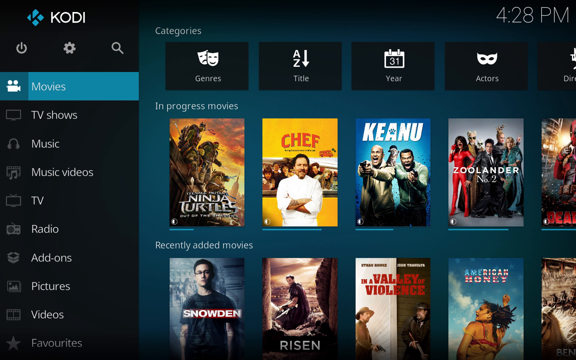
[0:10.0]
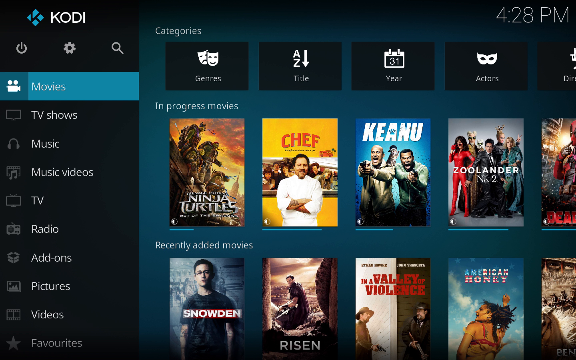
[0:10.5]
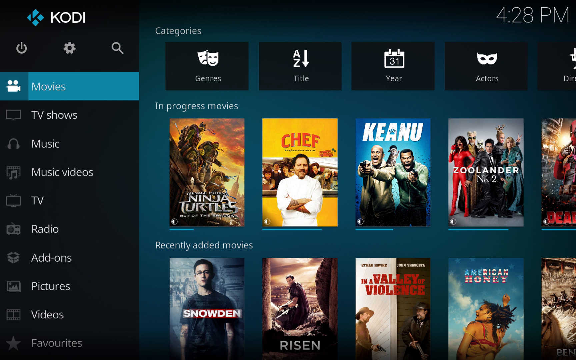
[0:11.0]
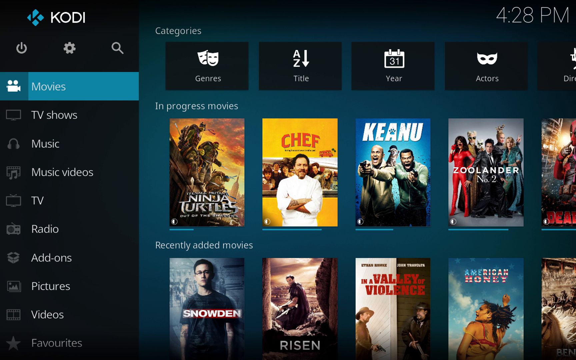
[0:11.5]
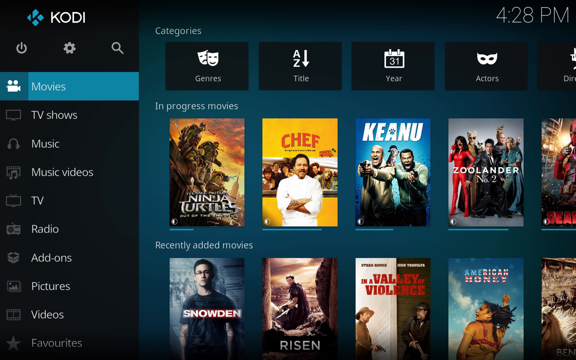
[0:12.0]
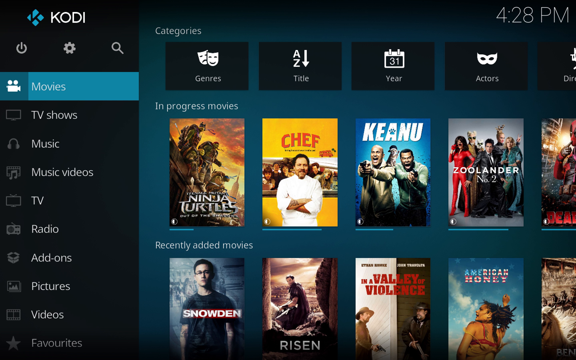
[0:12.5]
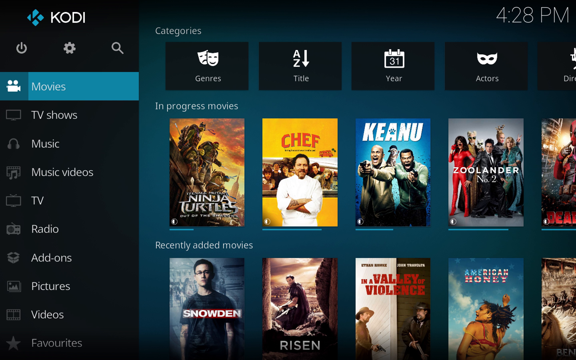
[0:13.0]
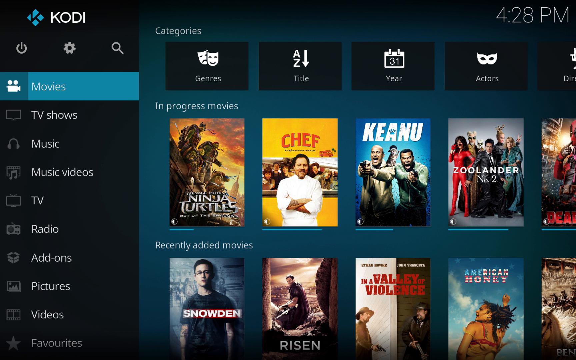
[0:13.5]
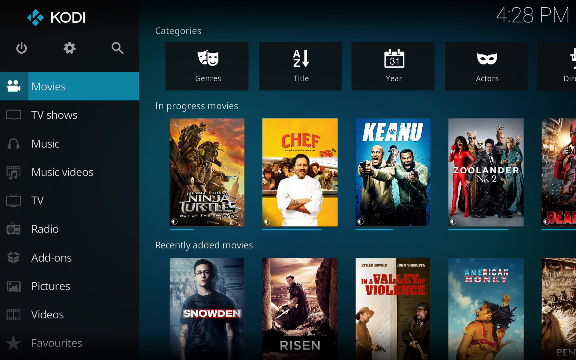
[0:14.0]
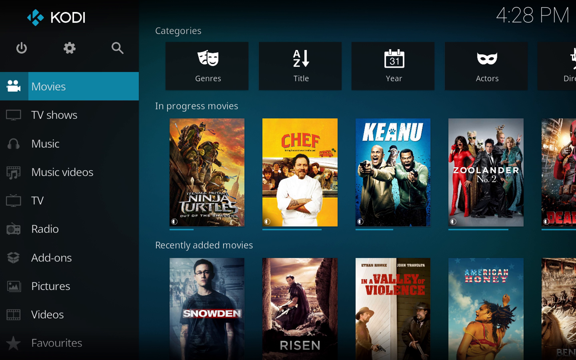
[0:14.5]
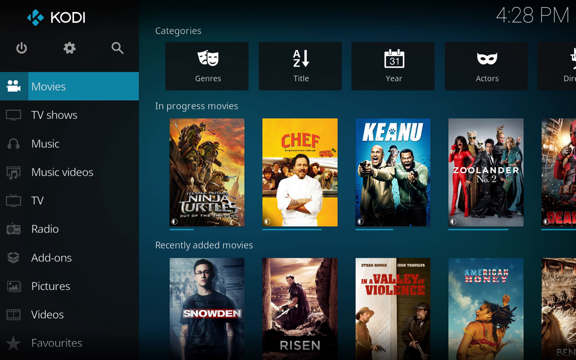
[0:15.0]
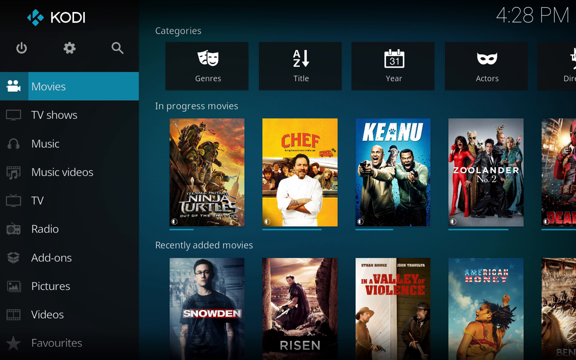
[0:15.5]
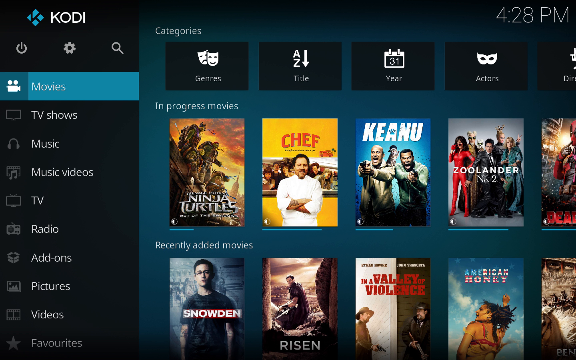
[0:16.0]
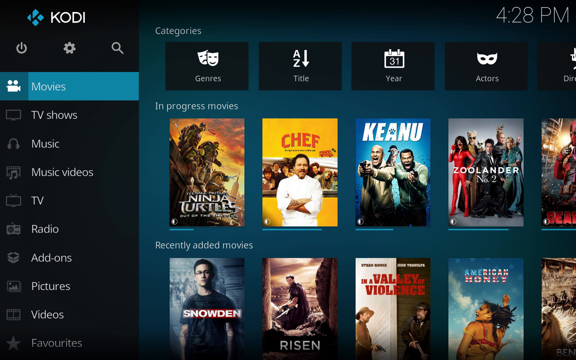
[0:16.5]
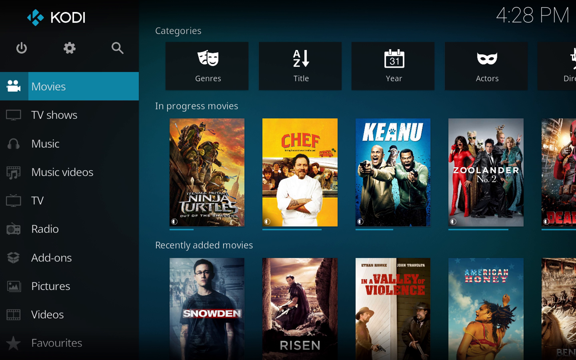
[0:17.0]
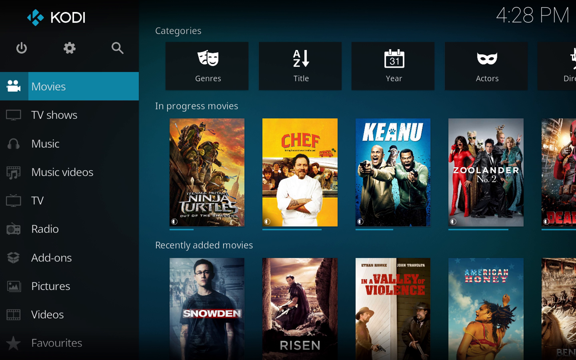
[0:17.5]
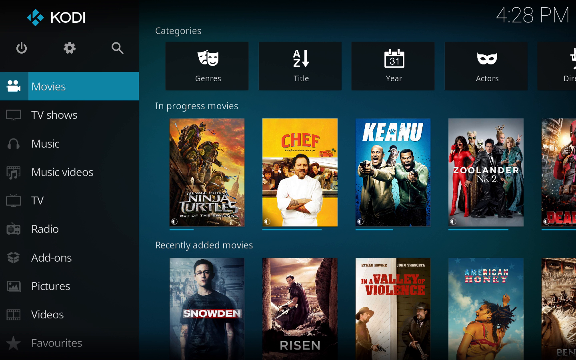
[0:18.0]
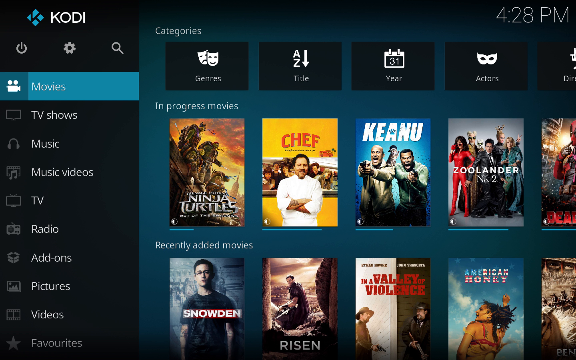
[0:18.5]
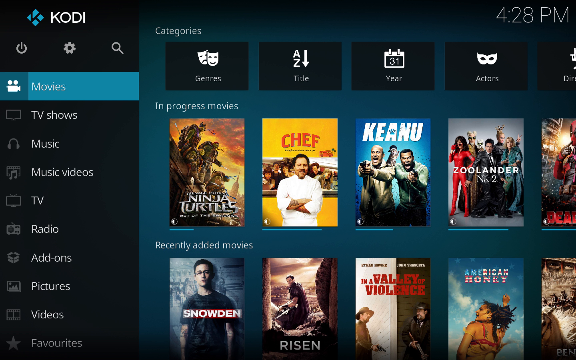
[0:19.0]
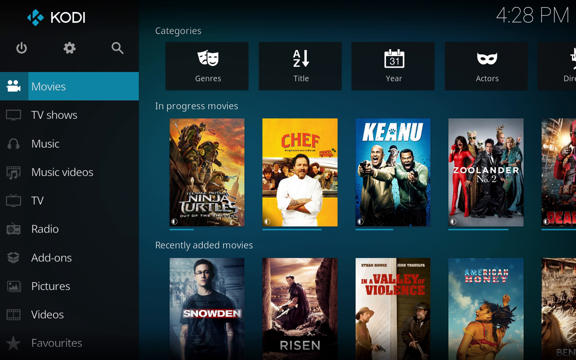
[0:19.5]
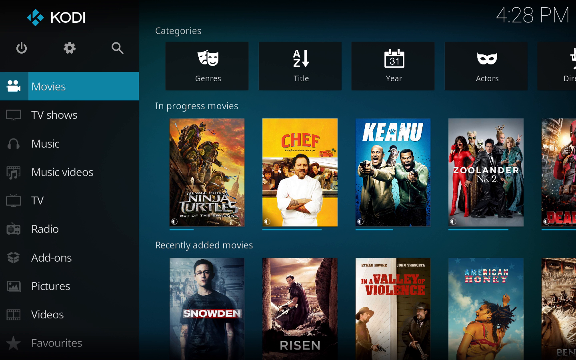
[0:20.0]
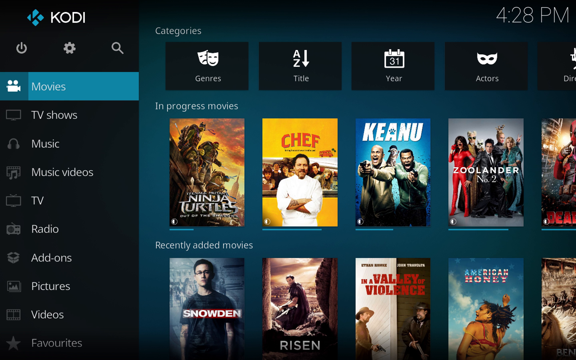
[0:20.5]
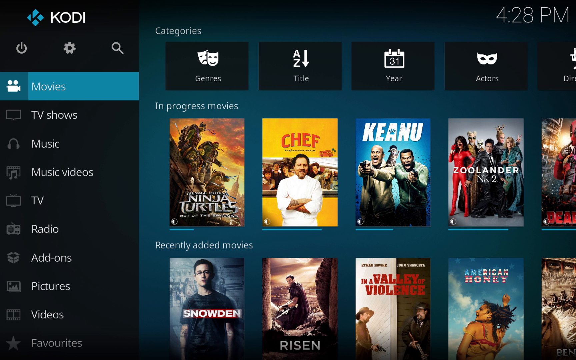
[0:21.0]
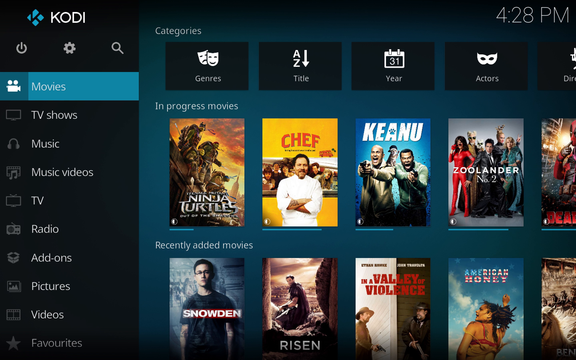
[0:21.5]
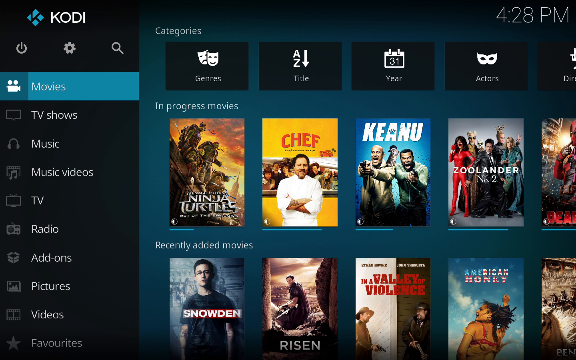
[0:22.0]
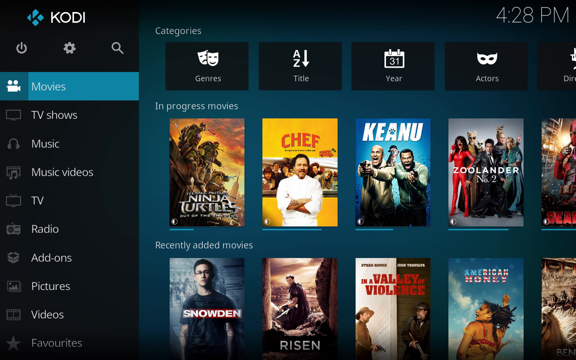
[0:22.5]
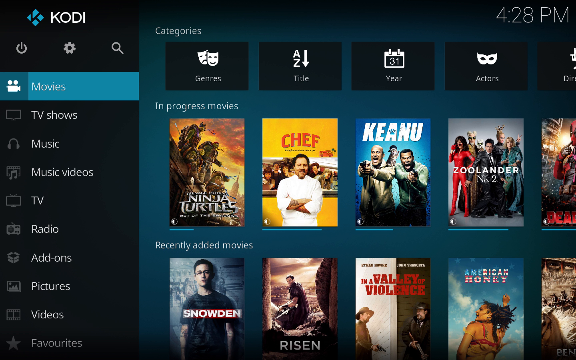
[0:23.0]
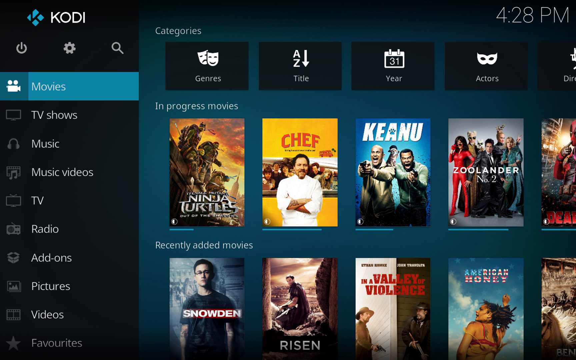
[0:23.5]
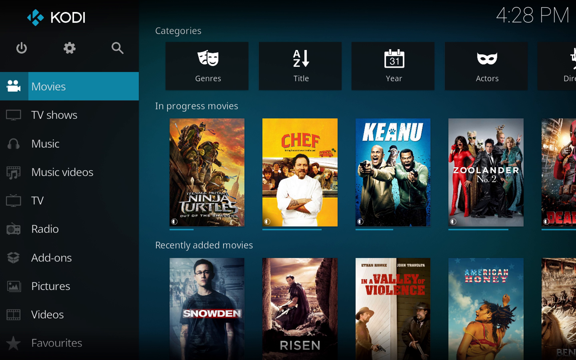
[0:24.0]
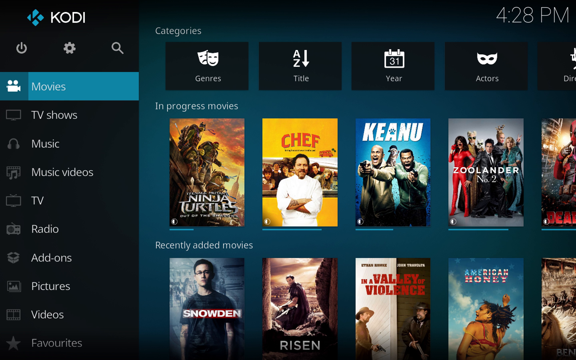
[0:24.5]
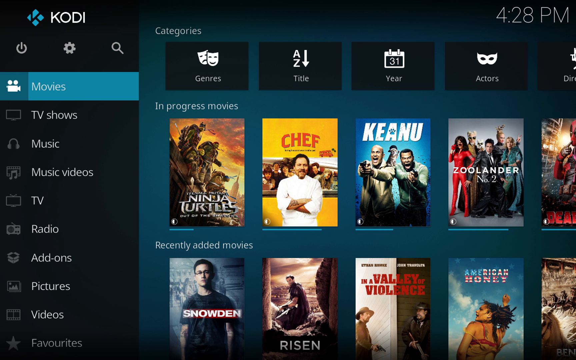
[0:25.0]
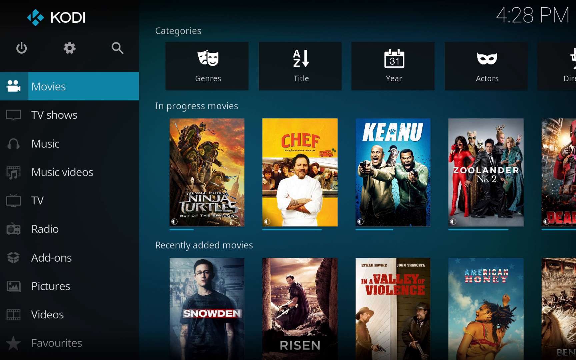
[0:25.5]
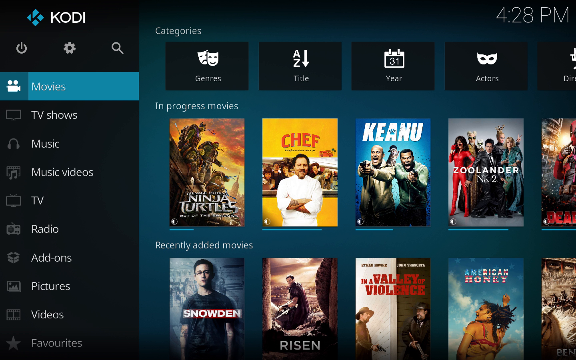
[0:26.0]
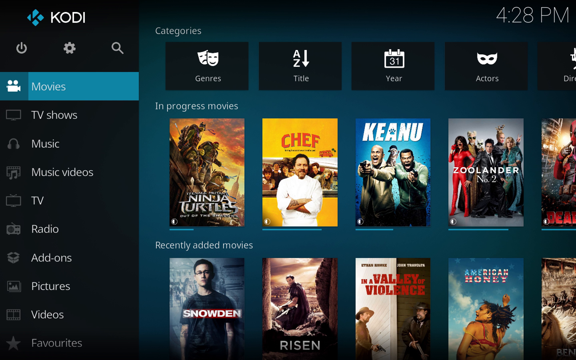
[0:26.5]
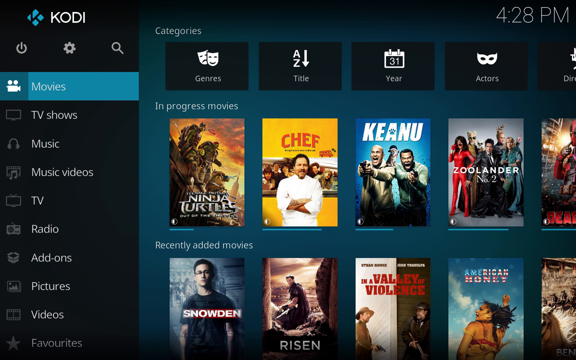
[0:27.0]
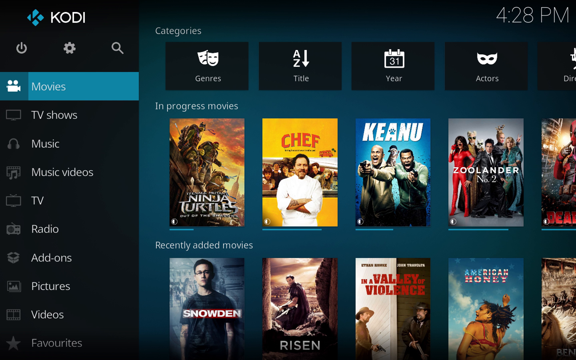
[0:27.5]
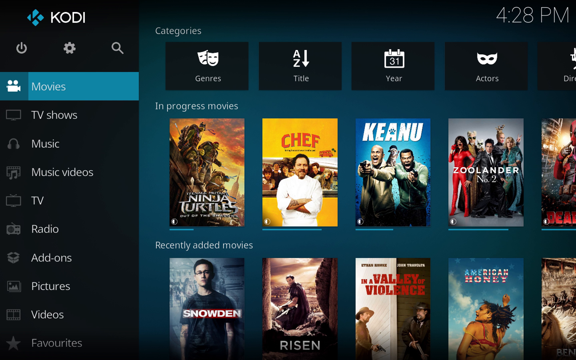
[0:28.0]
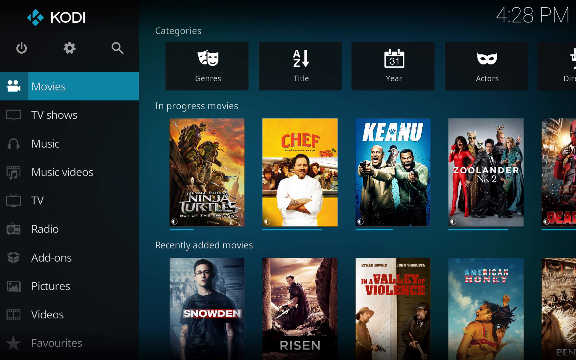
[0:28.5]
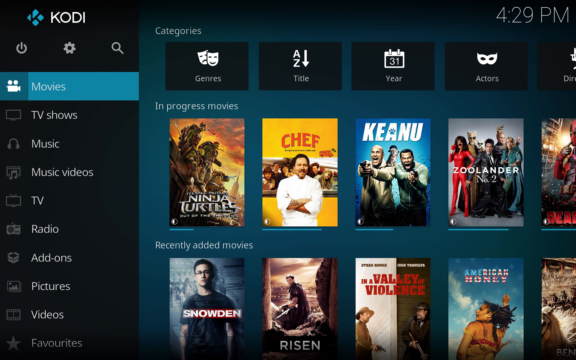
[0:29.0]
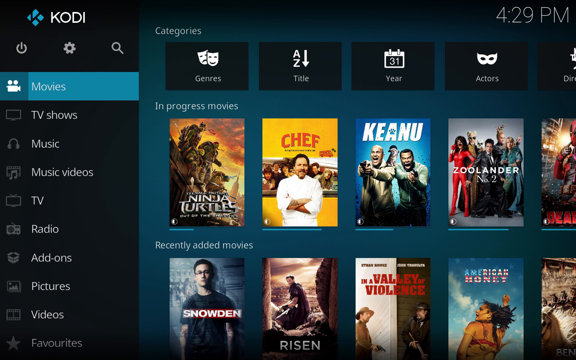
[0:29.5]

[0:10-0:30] A Windows screen of the Kodi app, a movie streaming app, is shown. The background is black and peacock green, and the screen is divided into two parts, with the left pane narrower than the right panel. The left side panel has the app name and logo, below which are a power off icon, settings and a search button. Below those, categories such as movies, TV shows, music, TV, radio and add-ons are listed in white, each with an icon to its left; movies is highlighted in peacock green. The right part shows the time 4.28 pm in the top right corner. Below it are categories, in-progress movies and recently added movies. Under categories are separate white icons on a black background, such as genres, titles, year and actress. Below that, in-progress movies are shown with movie posters, names and a blue loading bar indicating how much has been viewed, and below those, recently added movies appear with posters. The cursor does not move.